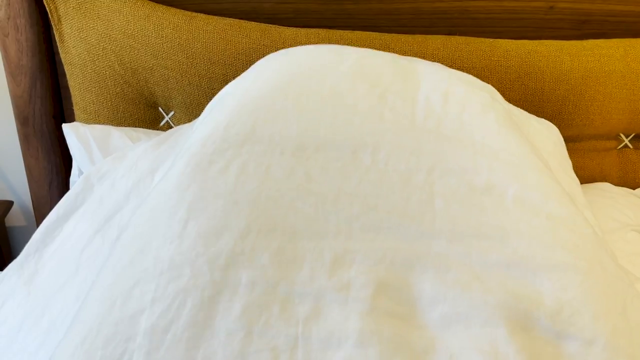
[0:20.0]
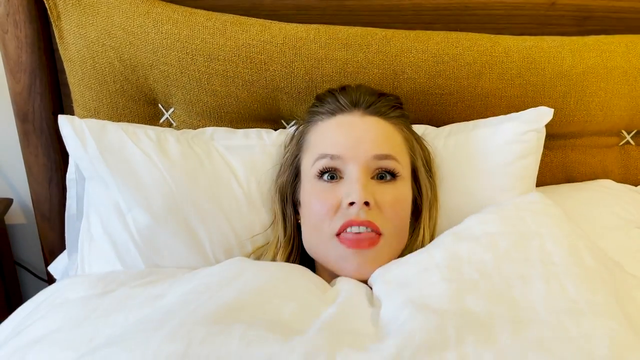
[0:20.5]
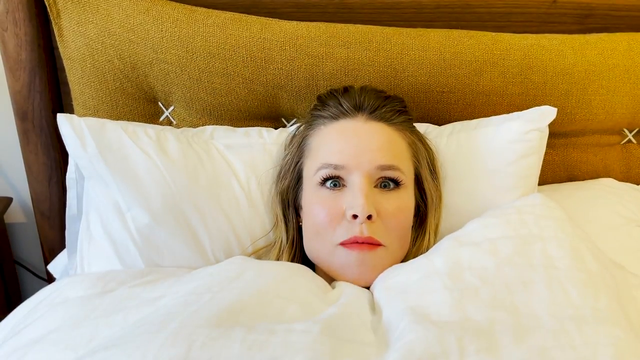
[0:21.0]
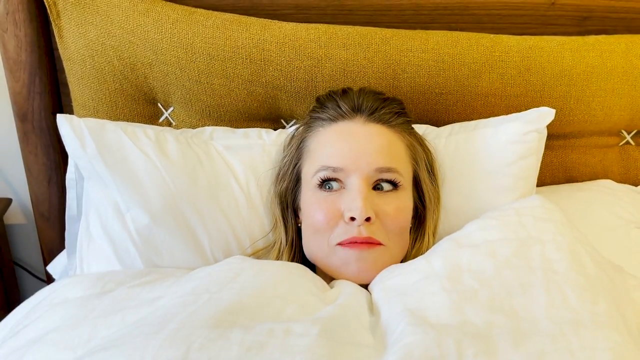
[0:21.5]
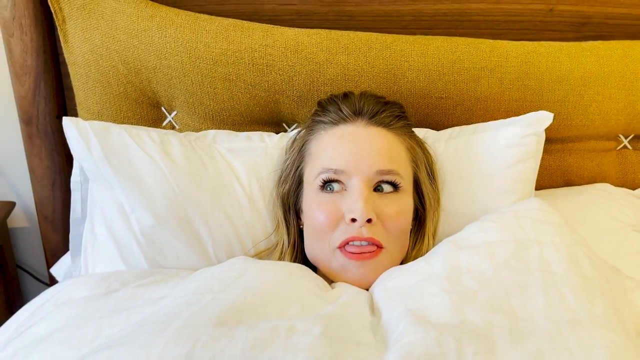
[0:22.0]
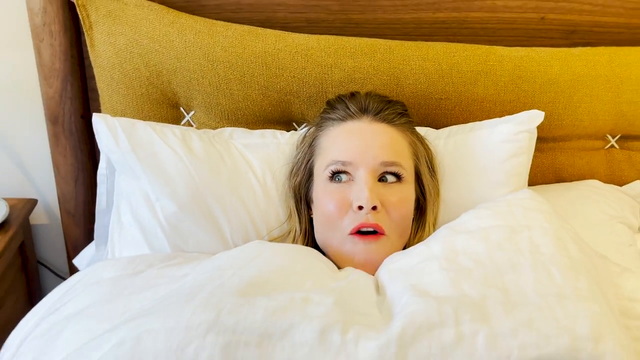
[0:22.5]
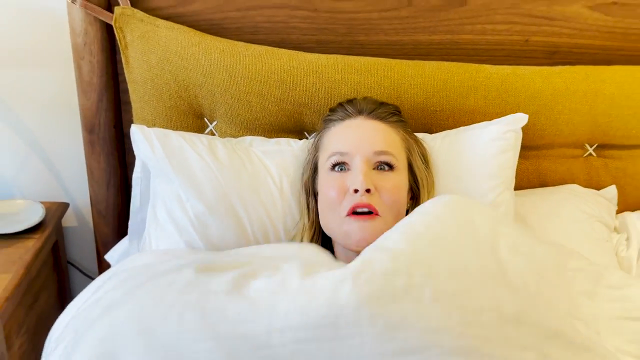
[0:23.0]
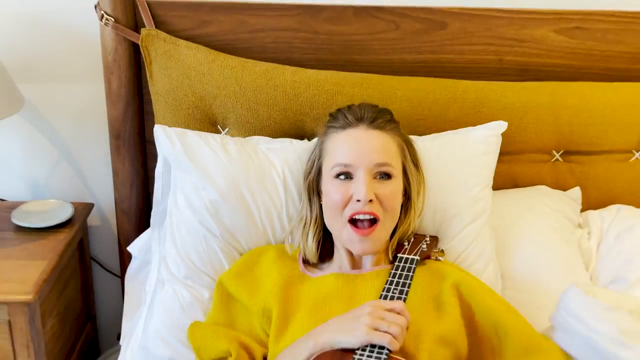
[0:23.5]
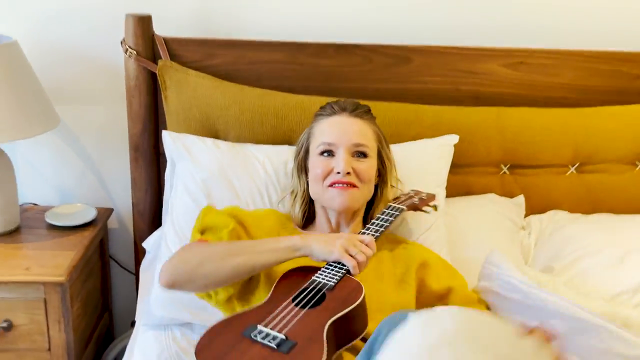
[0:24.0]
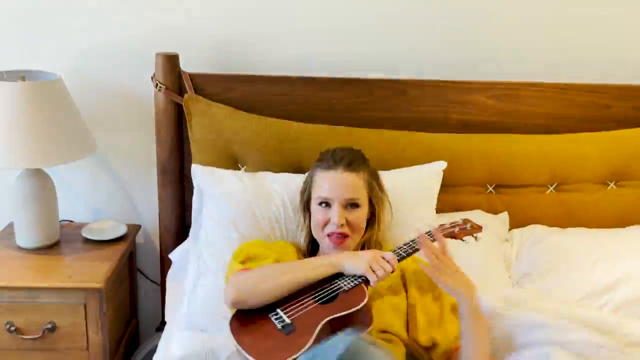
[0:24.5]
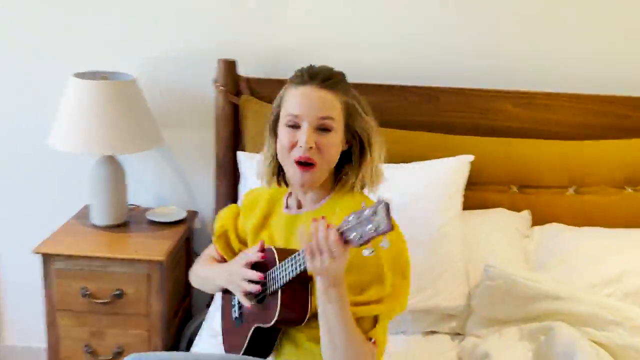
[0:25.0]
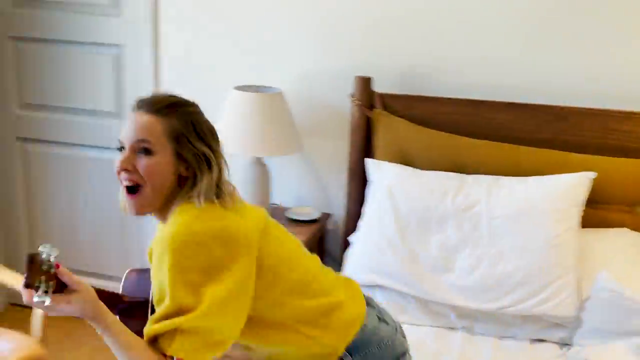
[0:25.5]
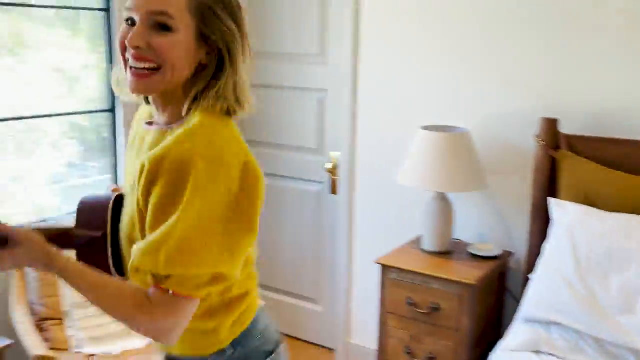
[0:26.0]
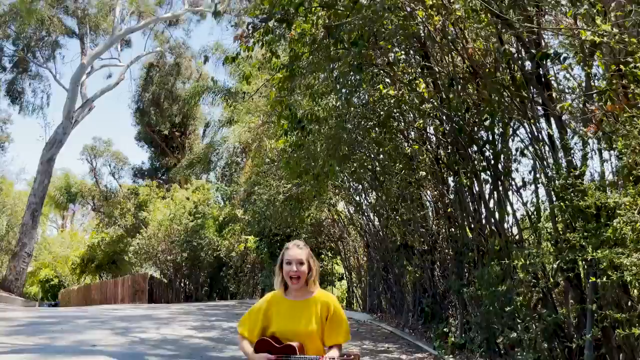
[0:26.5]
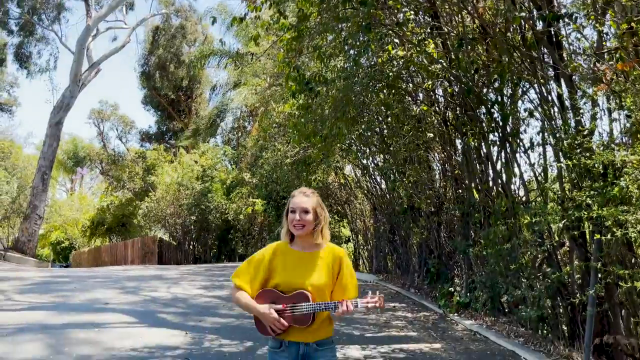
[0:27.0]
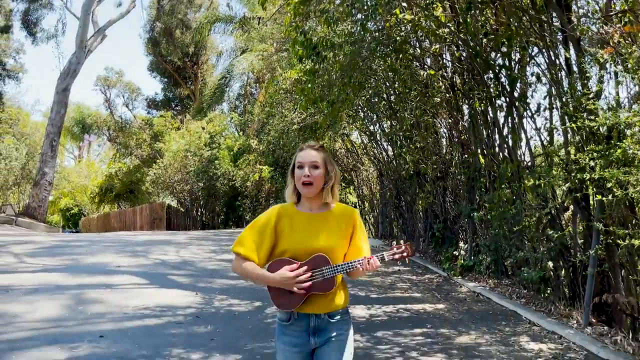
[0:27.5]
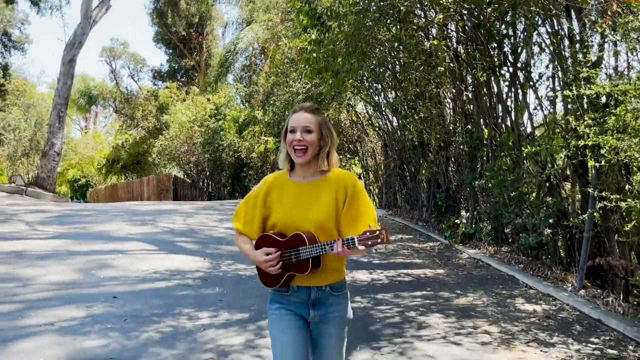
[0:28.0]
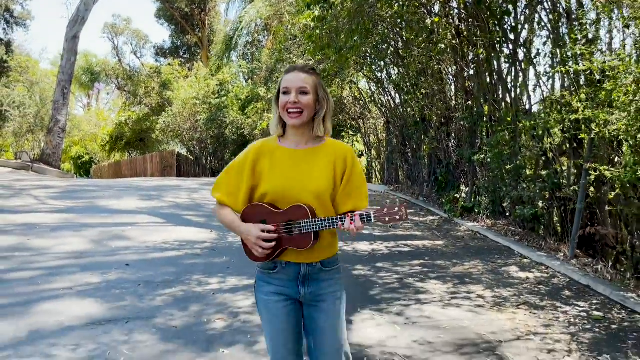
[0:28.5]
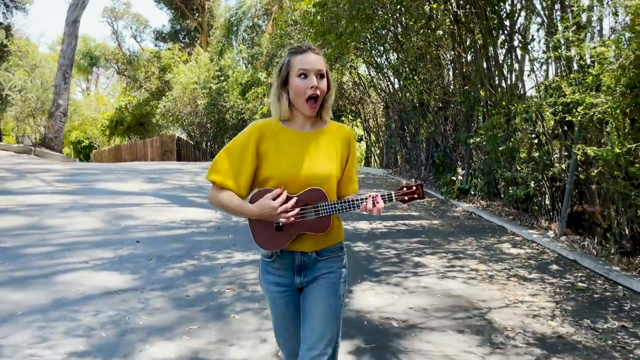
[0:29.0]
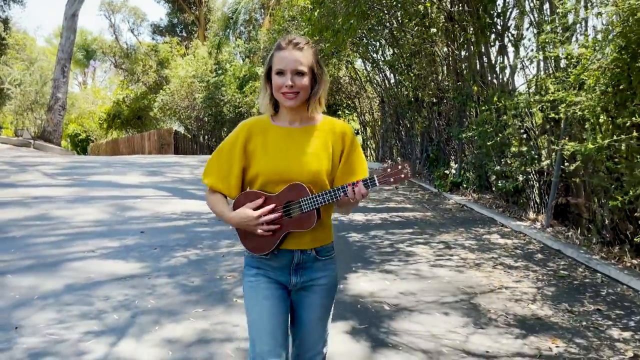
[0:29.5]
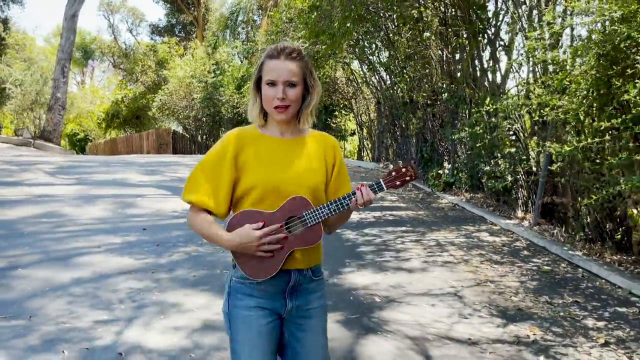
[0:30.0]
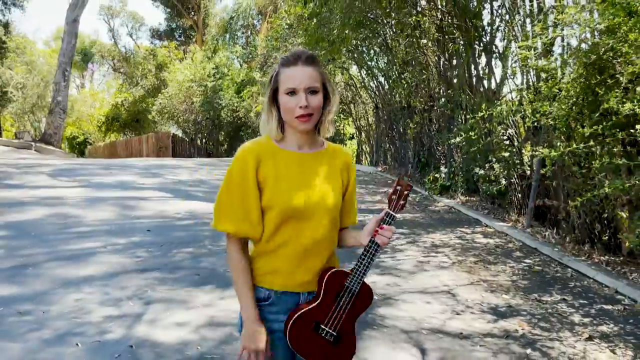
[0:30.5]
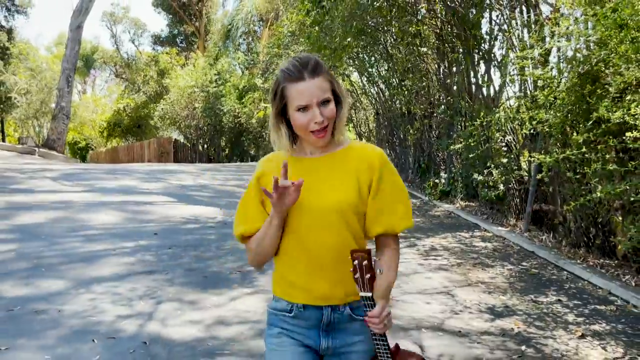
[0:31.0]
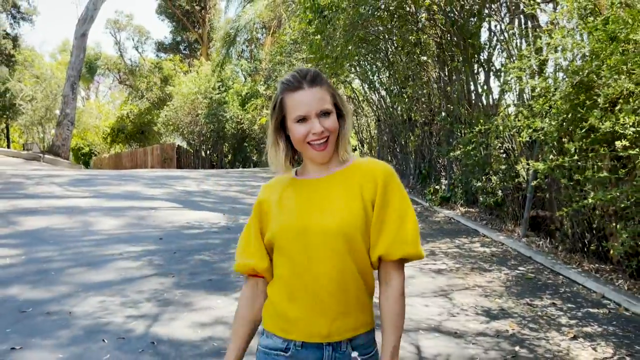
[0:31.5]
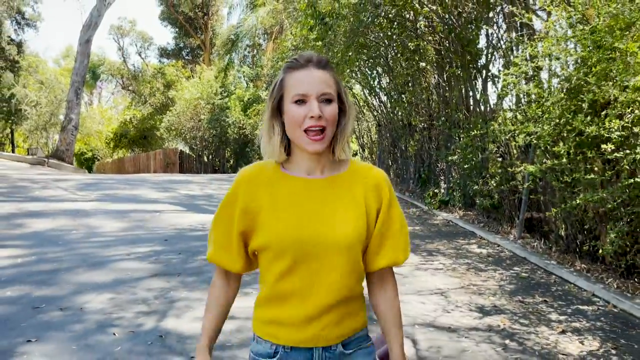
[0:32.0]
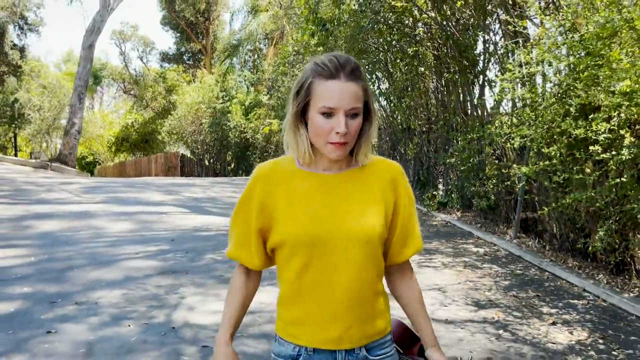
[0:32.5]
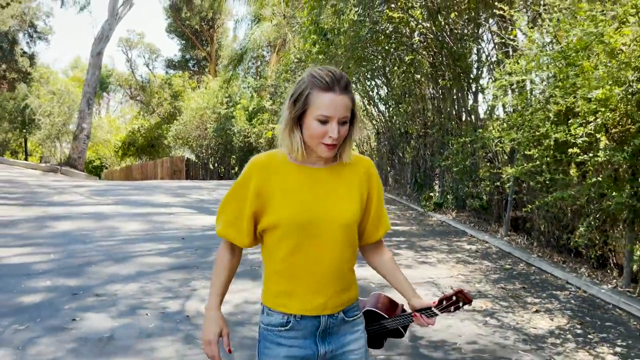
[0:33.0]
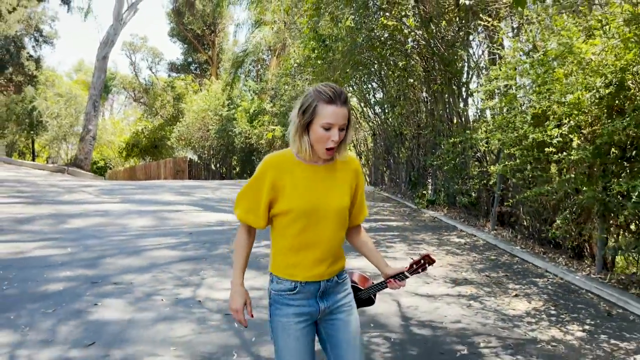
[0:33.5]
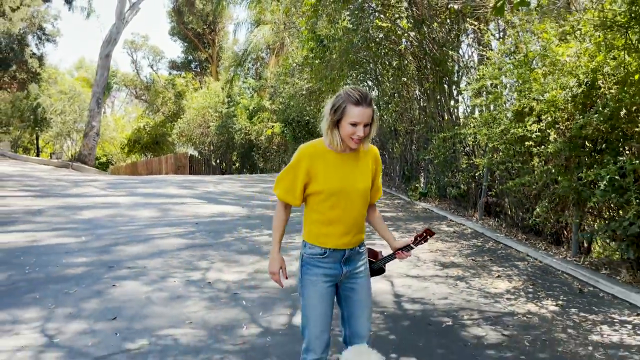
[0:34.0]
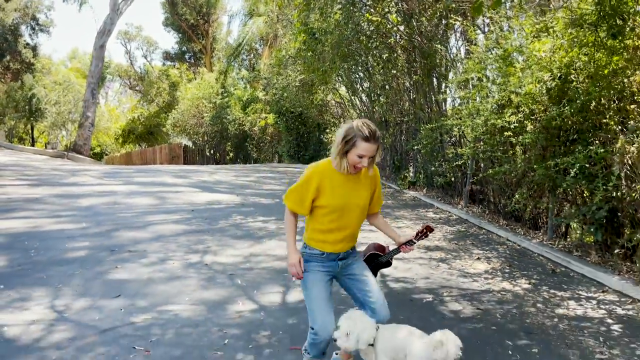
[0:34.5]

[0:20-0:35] The shot is zoomed in on the covers over someone's head in the bedroom. A woman pulls the covers down, revealing her blonde hair, pulled back on top of her head, and her makeup done. She starts to sing, looking happy, pulls the covers off, and jumps out of bed holding the little guitar, singing and playing it. She wears a yellow top and blue jeans, and she walks out of sight. In the next scene she walks down a street or driveway, playing the guitar and singing. Trees line the driveway, and there is a really thick tree in the back left. As she walks and sings, she kneels down beside a little white dog with curly white hair, wearing a leash and a collar. She sings to the dog, scrubs and pets its head, and acts like she is trying to kiss it, singing the whole time.